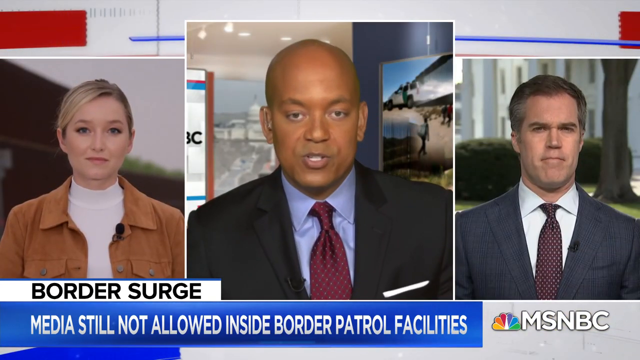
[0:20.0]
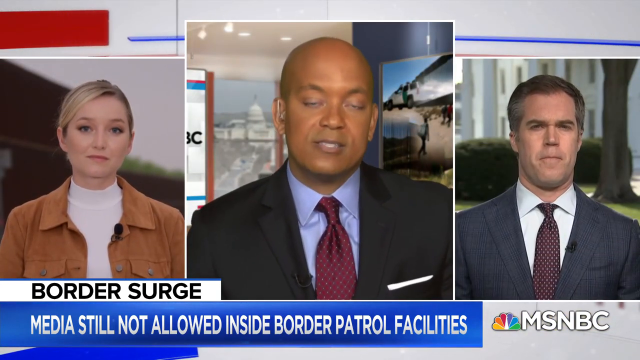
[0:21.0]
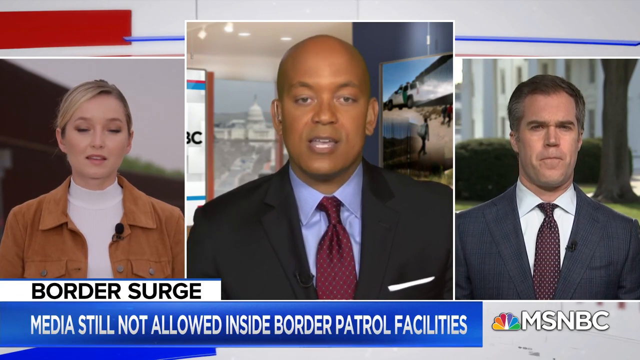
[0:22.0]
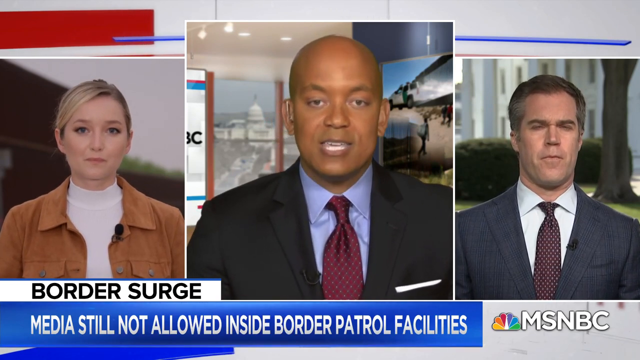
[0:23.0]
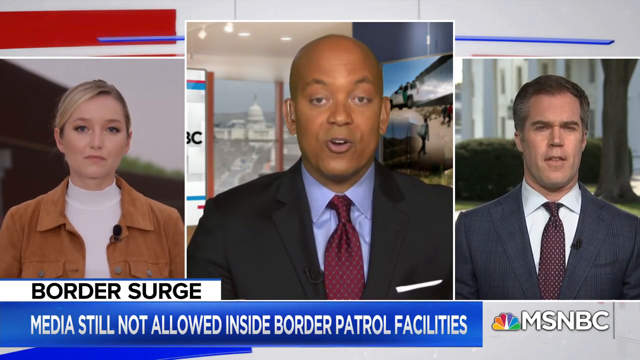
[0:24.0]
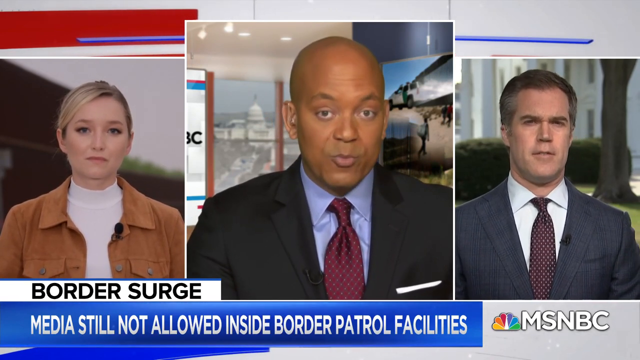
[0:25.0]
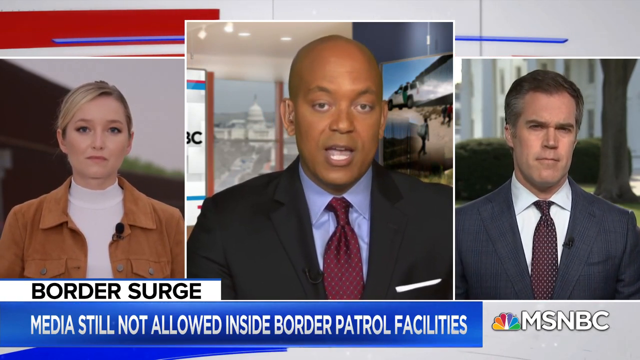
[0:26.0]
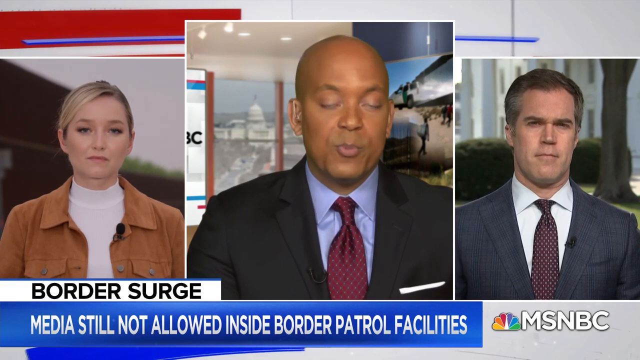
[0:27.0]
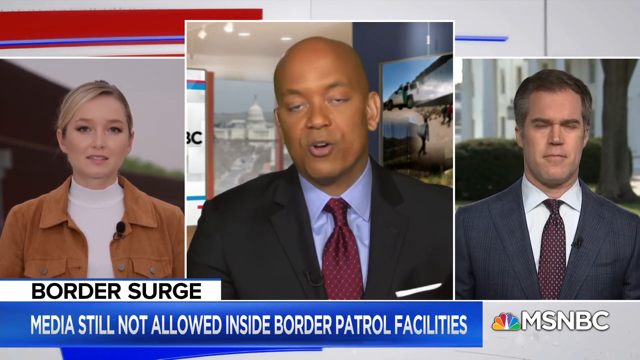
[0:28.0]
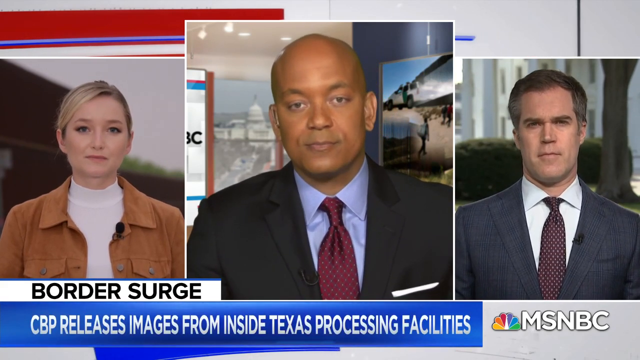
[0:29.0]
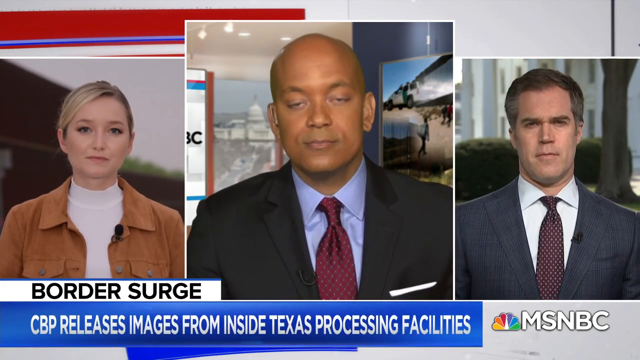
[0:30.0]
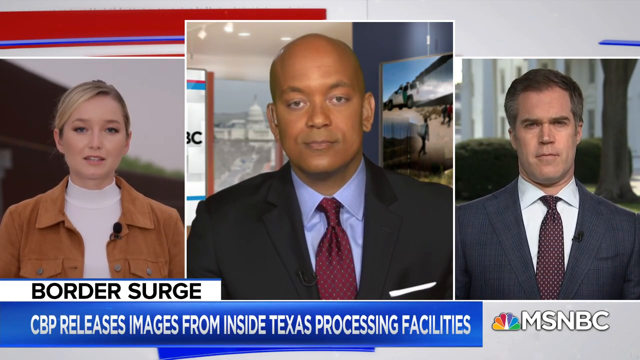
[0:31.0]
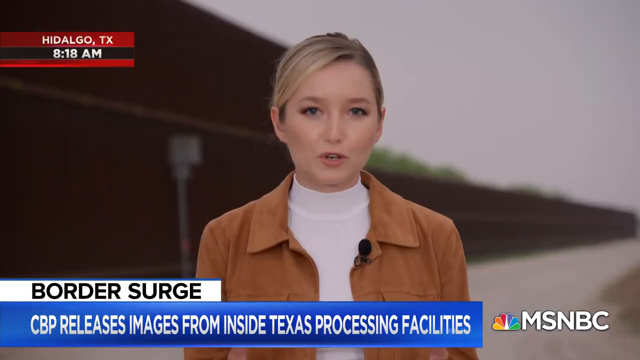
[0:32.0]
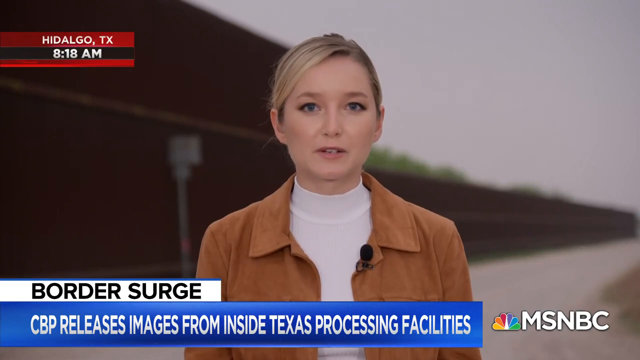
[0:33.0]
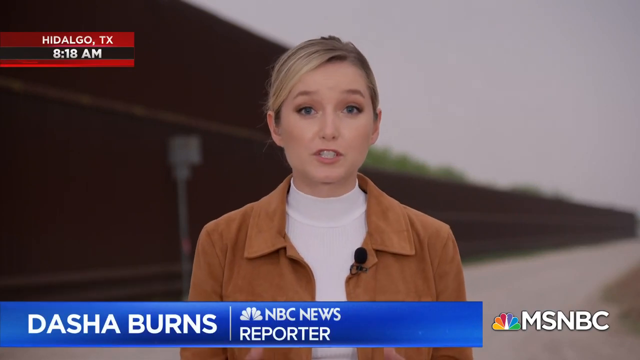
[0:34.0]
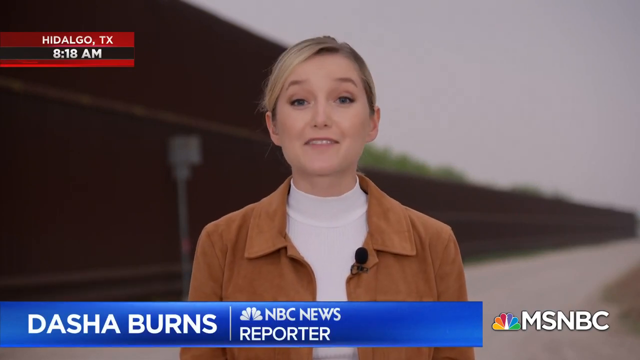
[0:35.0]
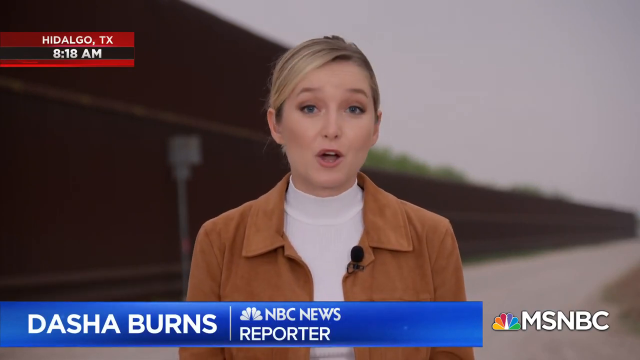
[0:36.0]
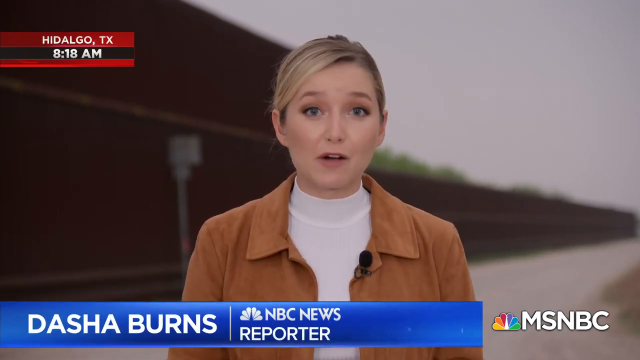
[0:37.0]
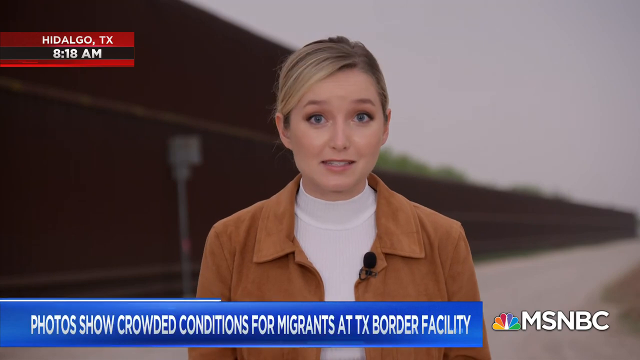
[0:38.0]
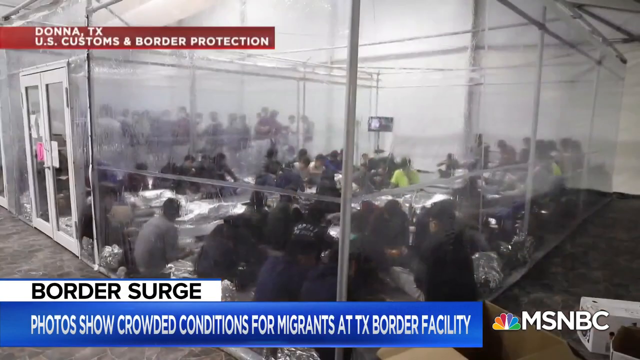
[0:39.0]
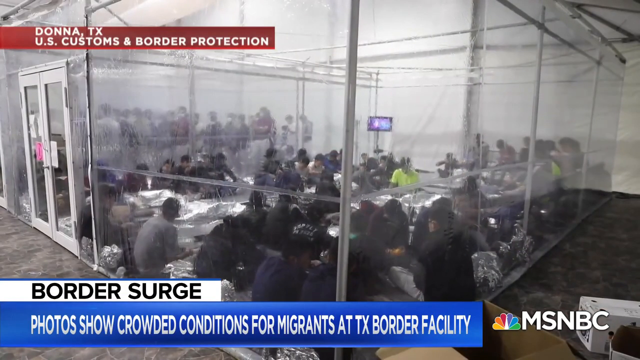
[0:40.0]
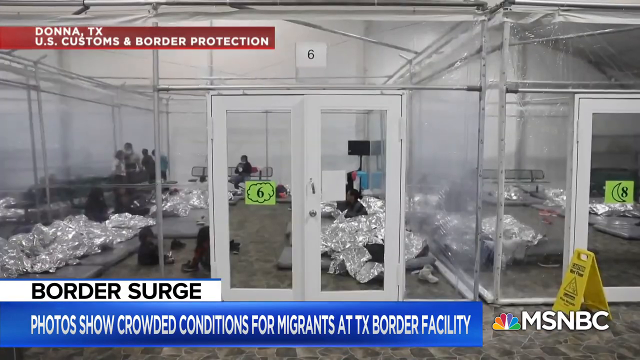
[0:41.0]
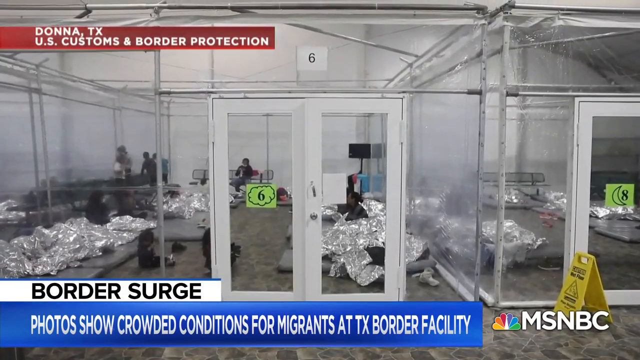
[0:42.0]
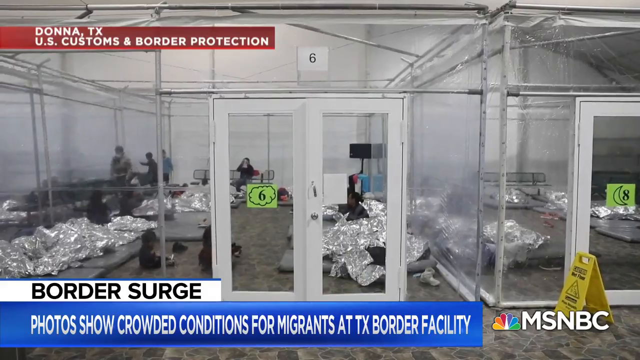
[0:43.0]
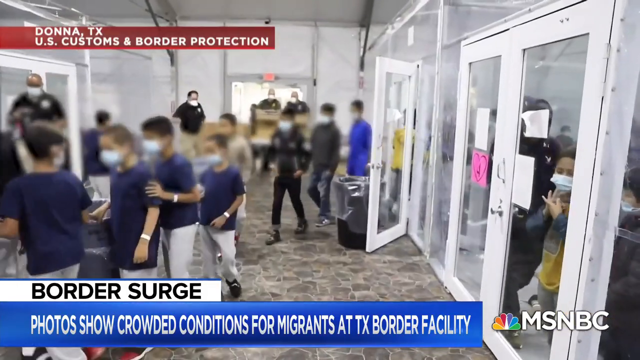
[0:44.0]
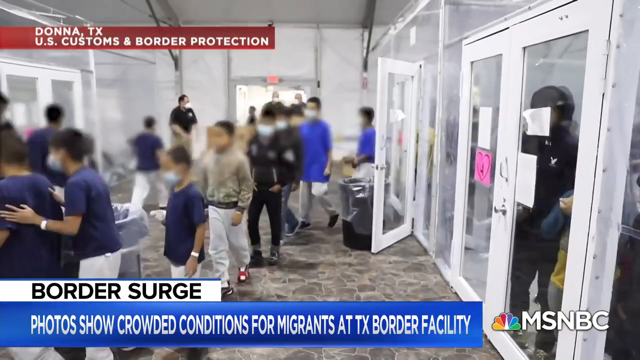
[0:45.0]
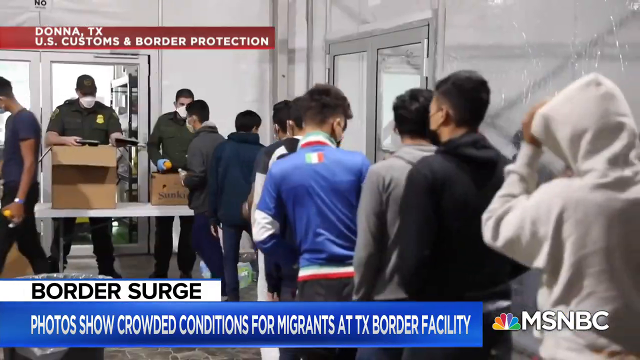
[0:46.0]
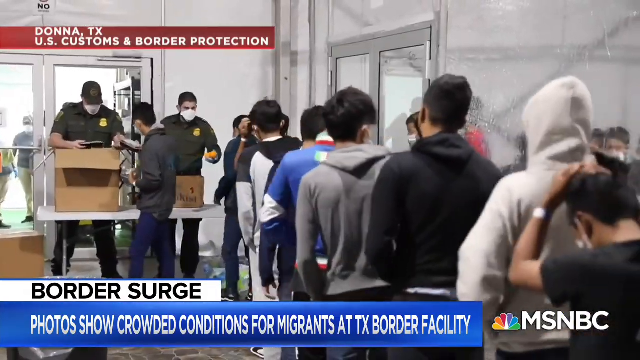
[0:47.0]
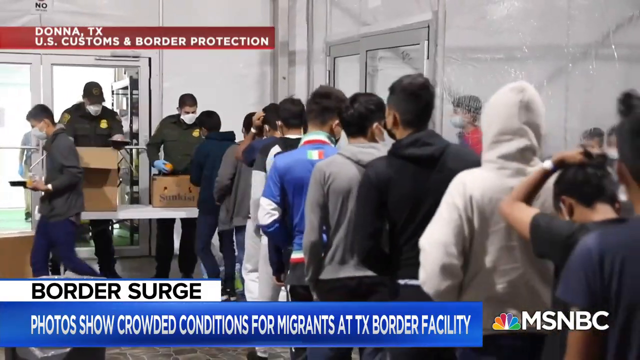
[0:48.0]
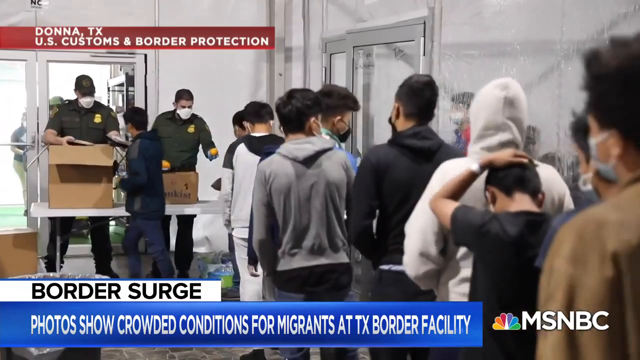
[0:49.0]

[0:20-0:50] The screen is split into three sections. In the center is the man from the original newscast. To his left is a female reporter with blonde hair wearing a brown jacket, somewhere outside, and to the right is a man in a suit and tie in front of the White House. Graphics at the bottom read "Border Surge." The man in the center speaks while the female reporter on the left nods her head up and down, and then she begins to talk. The camera then focuses solely on her, so she fills the entire screen. Graphics in the upper left corner read "Hidalgo, Texas" and "8.18 a.m." She speaks directly into the camera, framed from the chest up. The video then cuts to footage of a see-through, greenhouse-looking room with some individuals sitting inside. Next, several people walk in a line wearing masks; some have blue T-shirts and others long-sleeved shirts. Viewed from the back, the line moves forward, and what appear to be border control officers at the front take something from the people as they reach the end of the line.